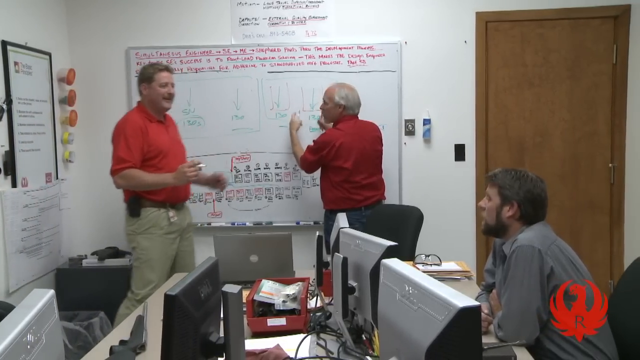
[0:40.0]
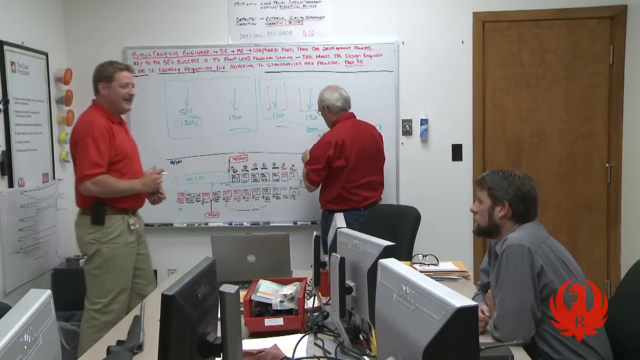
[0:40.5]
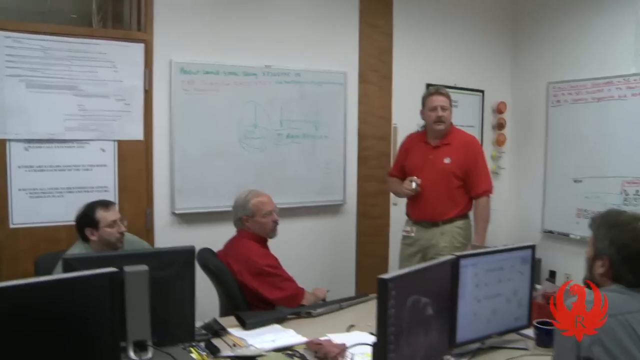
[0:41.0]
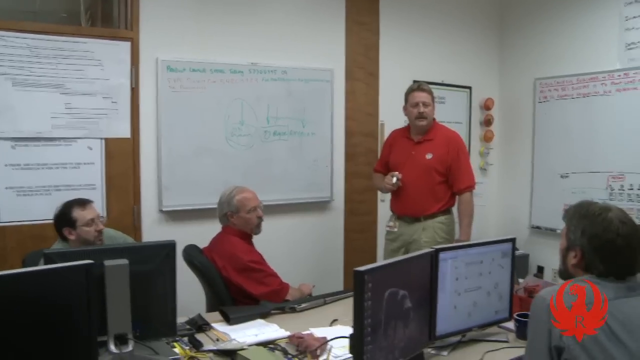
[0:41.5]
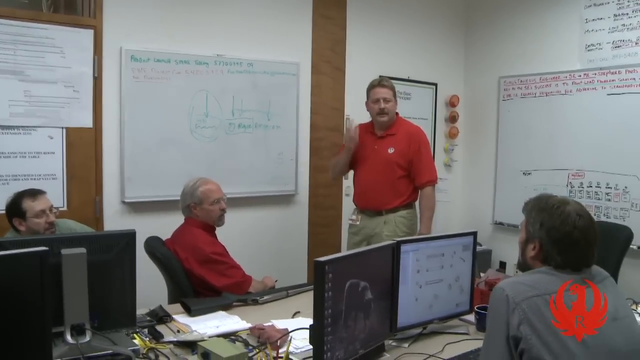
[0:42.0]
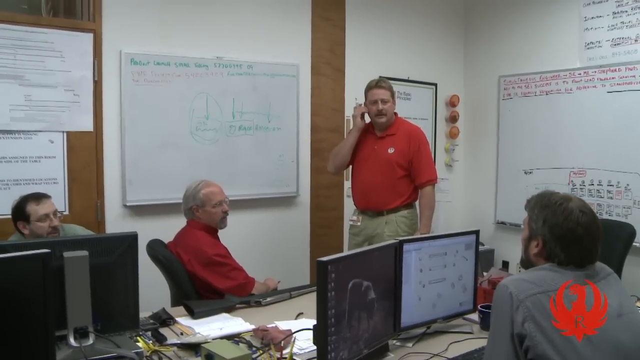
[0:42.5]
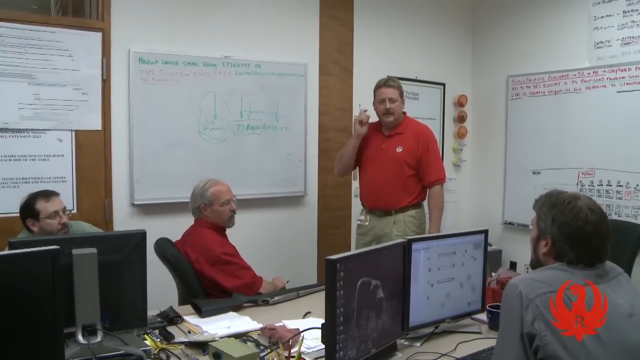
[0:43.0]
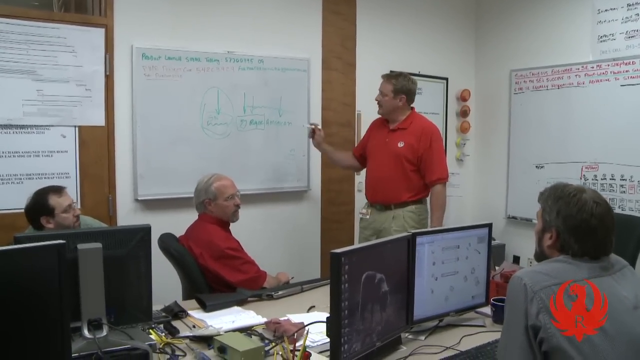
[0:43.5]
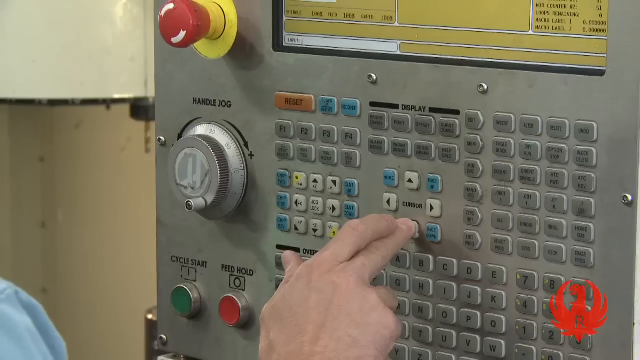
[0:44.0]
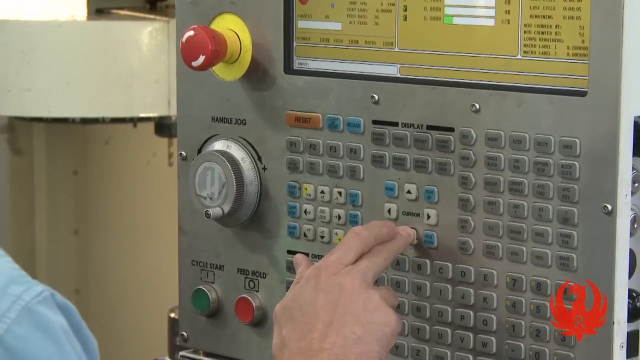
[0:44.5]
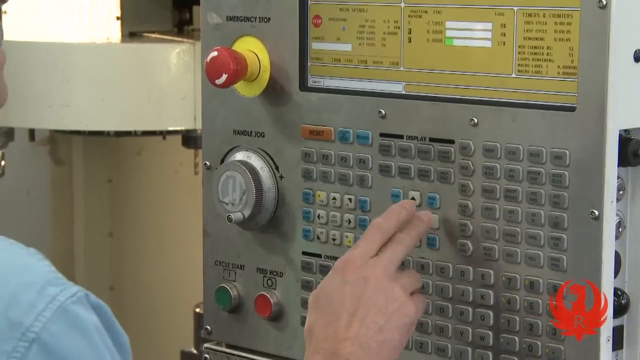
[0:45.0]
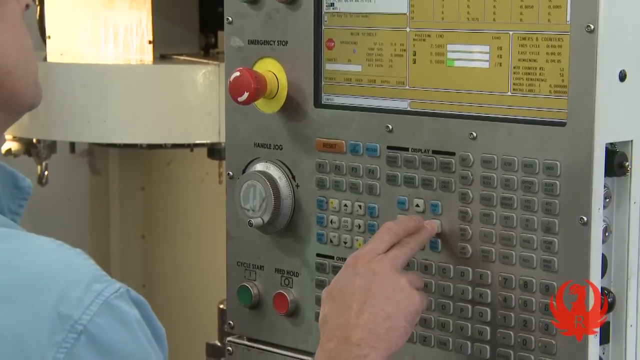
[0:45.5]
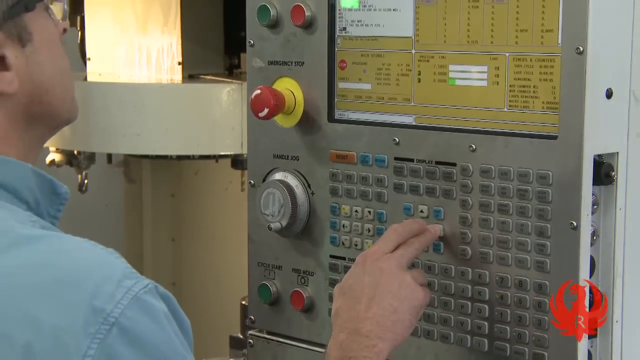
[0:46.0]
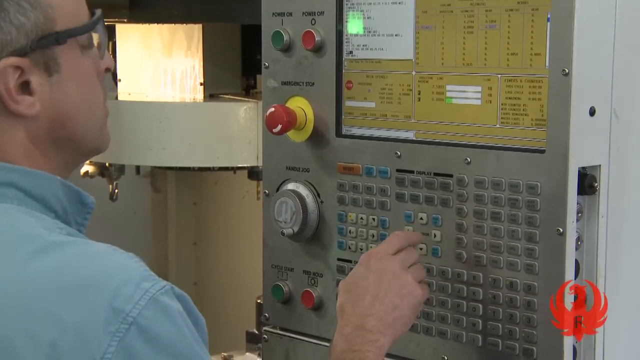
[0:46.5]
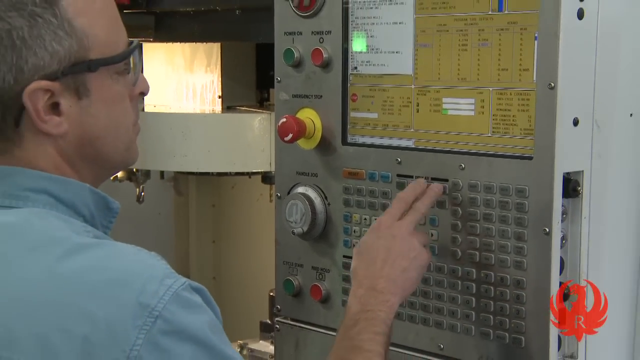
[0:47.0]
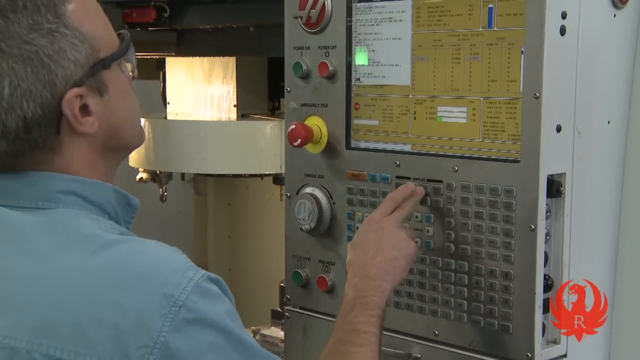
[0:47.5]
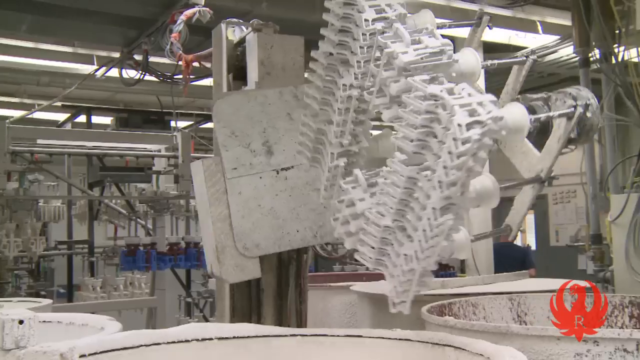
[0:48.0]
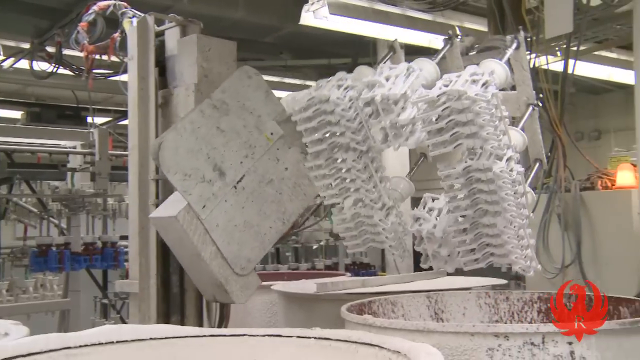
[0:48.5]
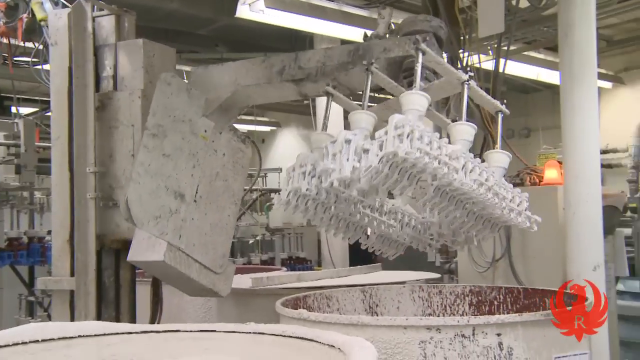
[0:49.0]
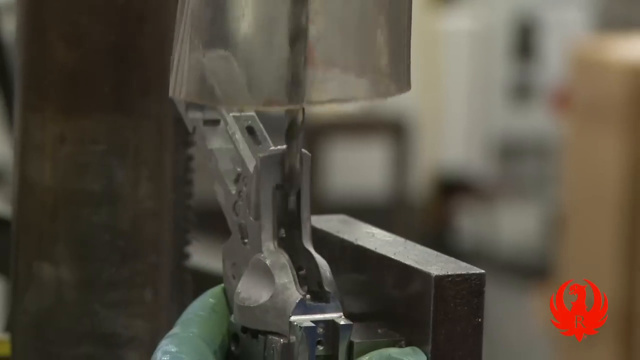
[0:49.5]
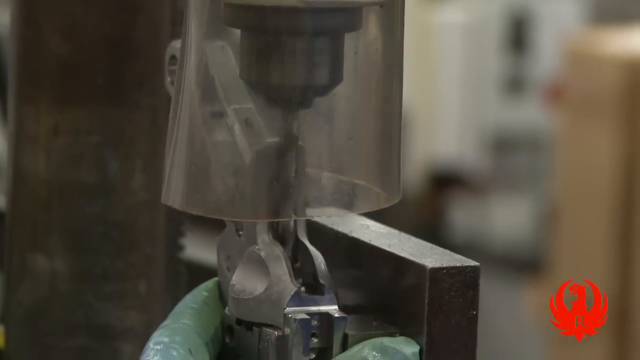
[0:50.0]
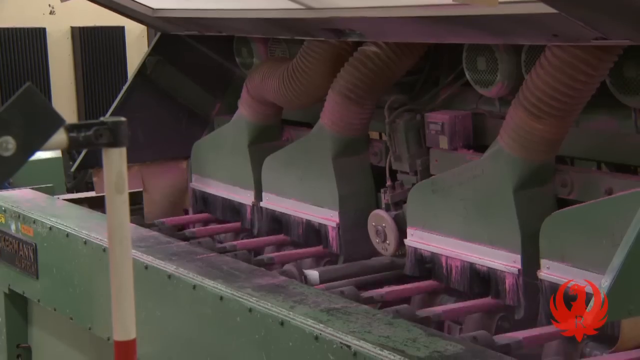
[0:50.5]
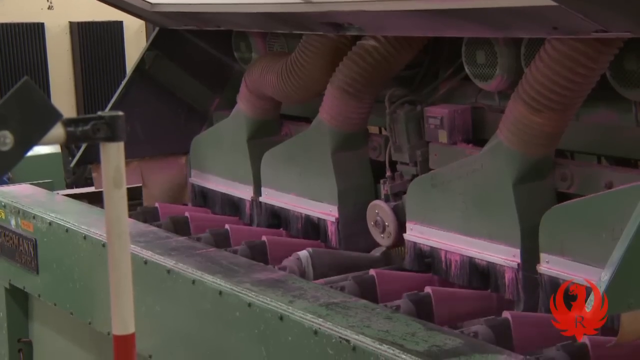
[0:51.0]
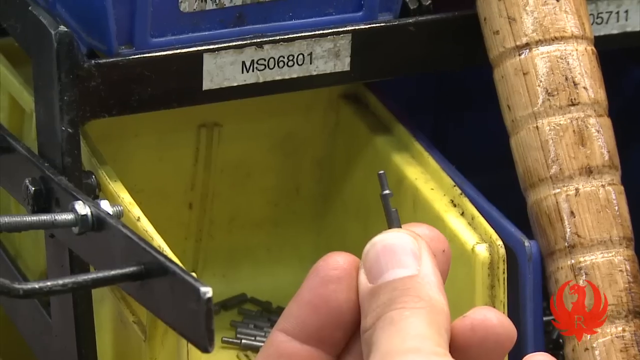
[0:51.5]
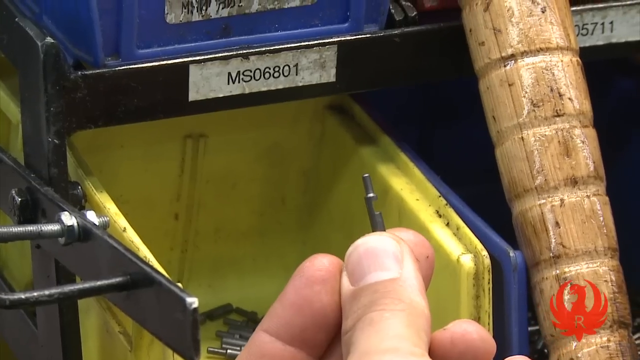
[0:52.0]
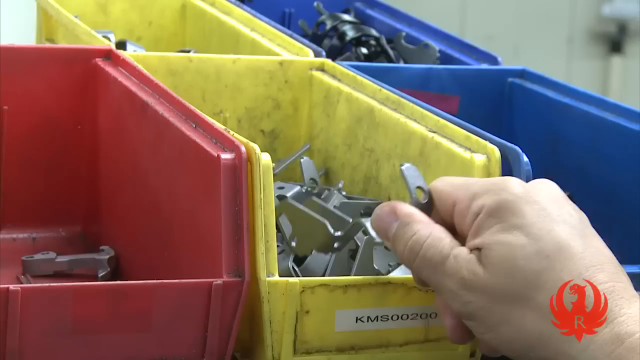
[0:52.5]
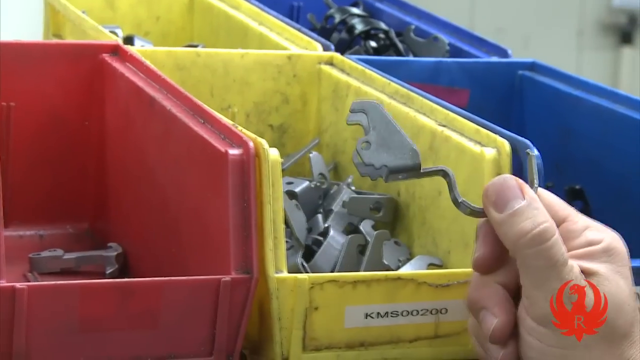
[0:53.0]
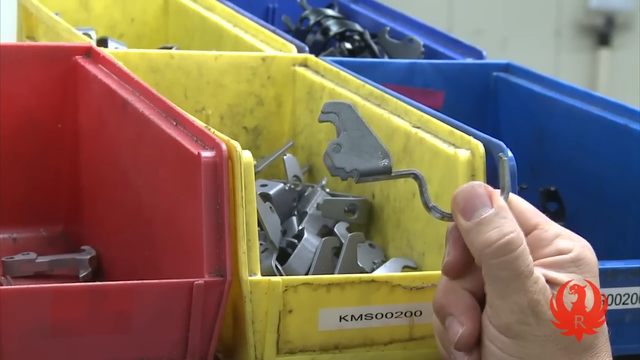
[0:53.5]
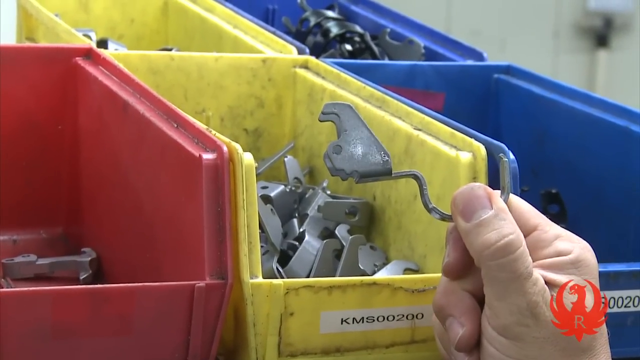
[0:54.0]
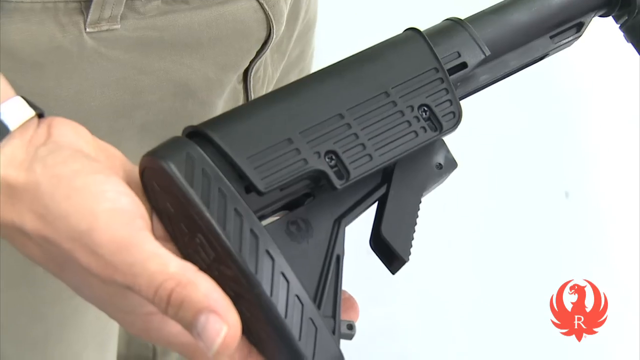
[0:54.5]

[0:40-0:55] This part, called Ruger How It Works Wax Molds from Ruger Firearms, shows men in front of a whiteboard and then a man in front of a machine. There is a machine, apparently holding the molds themselves, that seemingly will dip into the wax, and the man appears to pick up some wax molds out of a bin. The segment is apparently about the wax mold-making process. A part of a gun is then shown, apparently produced from the wax mold.